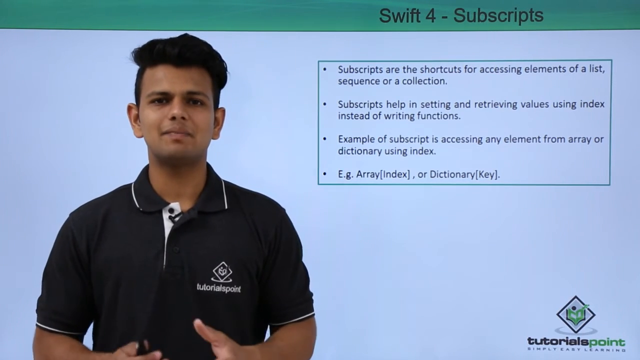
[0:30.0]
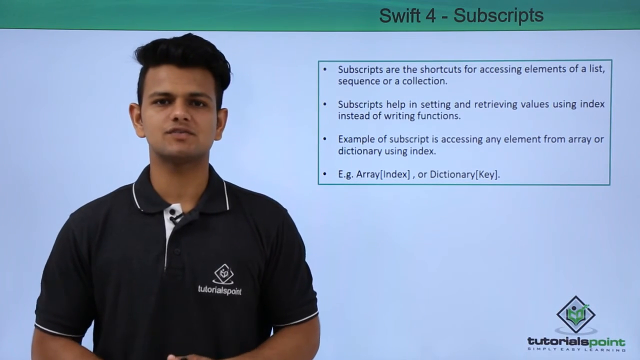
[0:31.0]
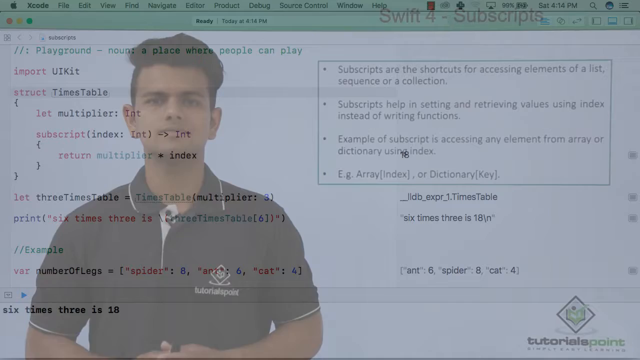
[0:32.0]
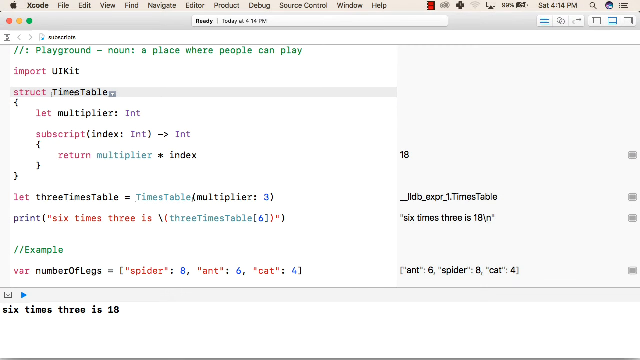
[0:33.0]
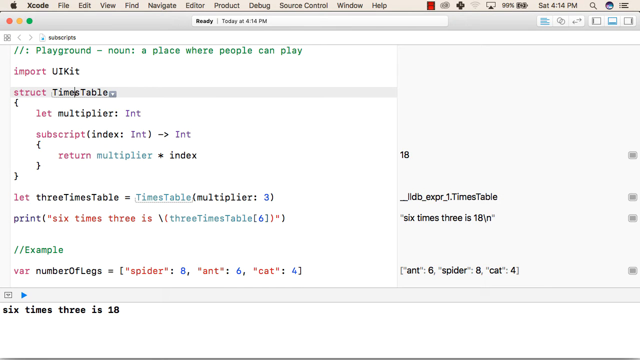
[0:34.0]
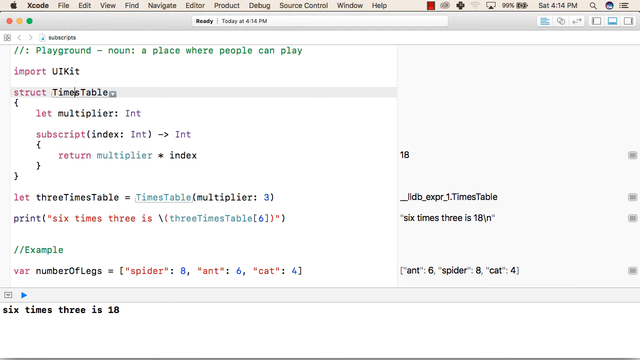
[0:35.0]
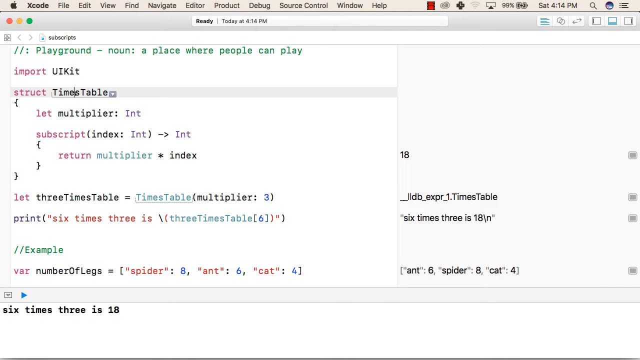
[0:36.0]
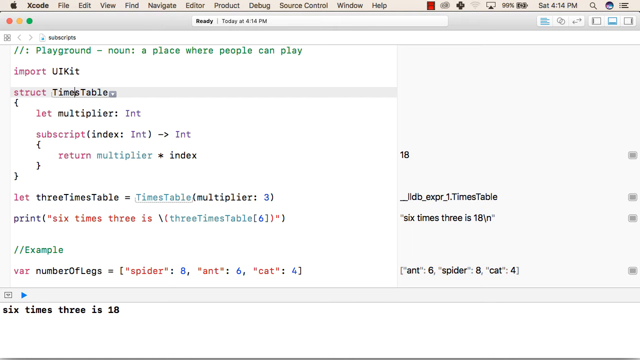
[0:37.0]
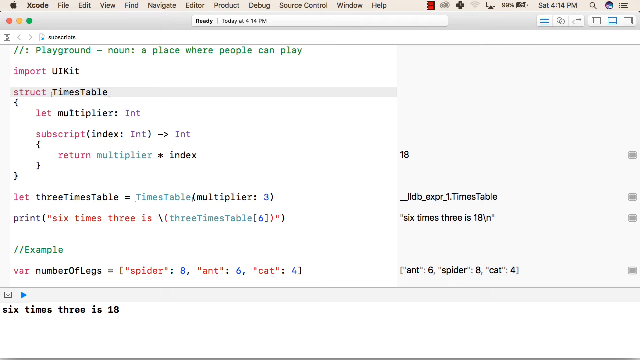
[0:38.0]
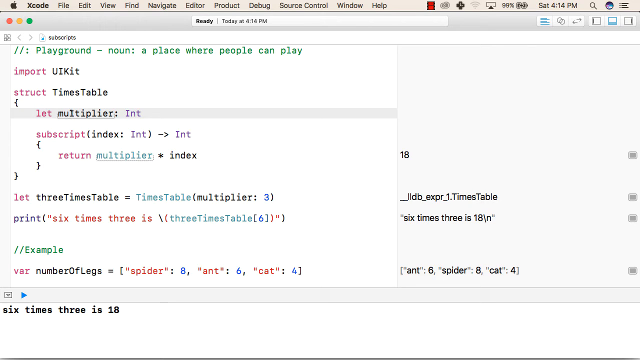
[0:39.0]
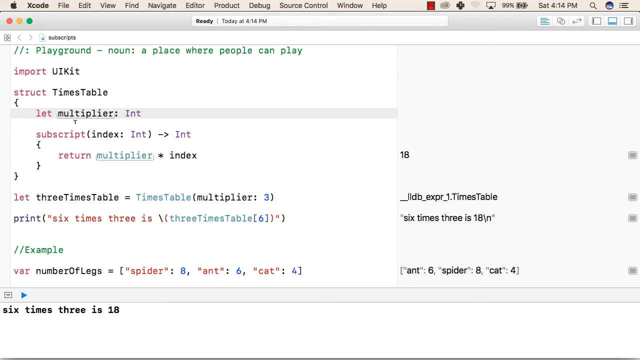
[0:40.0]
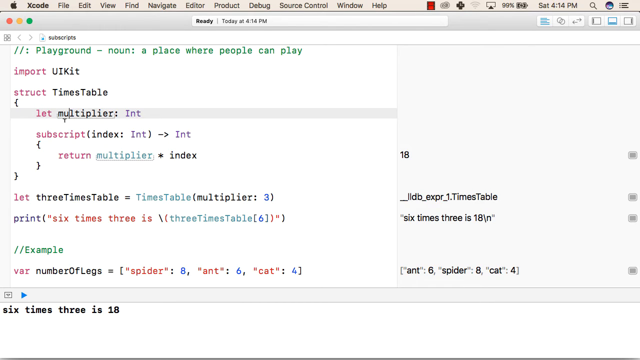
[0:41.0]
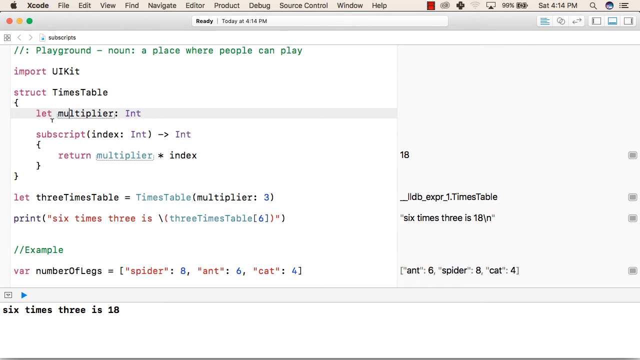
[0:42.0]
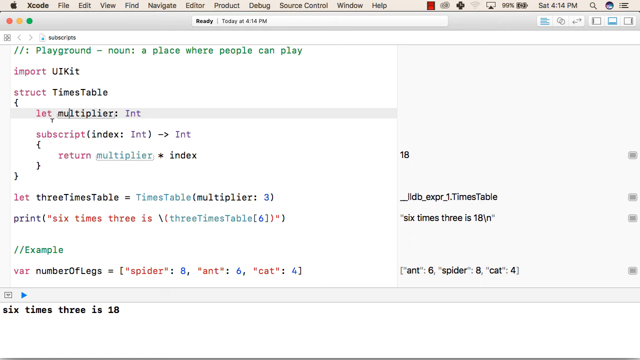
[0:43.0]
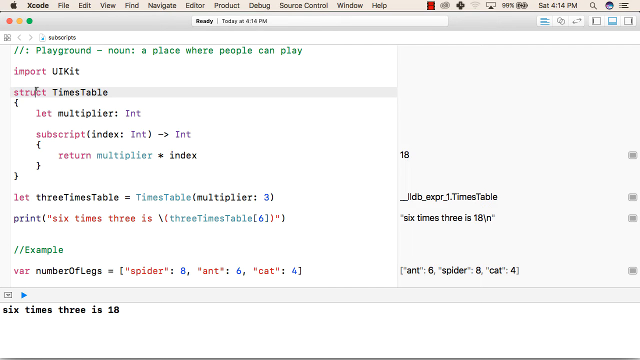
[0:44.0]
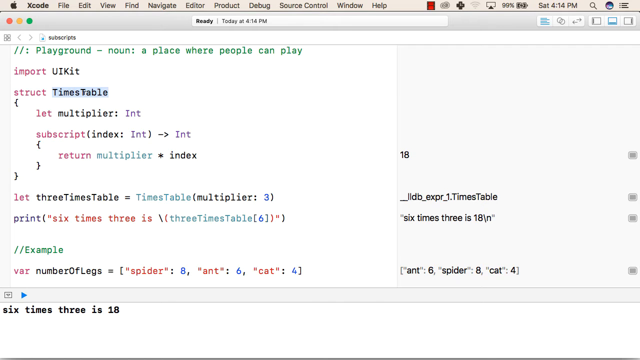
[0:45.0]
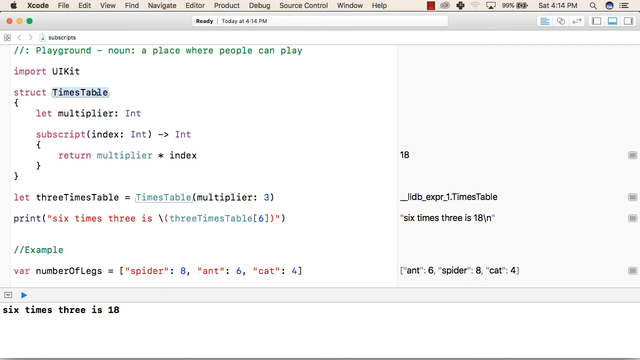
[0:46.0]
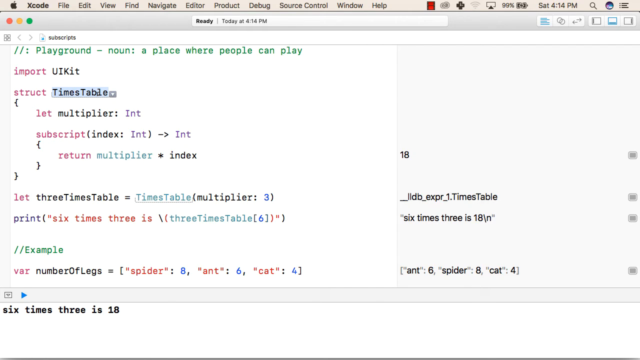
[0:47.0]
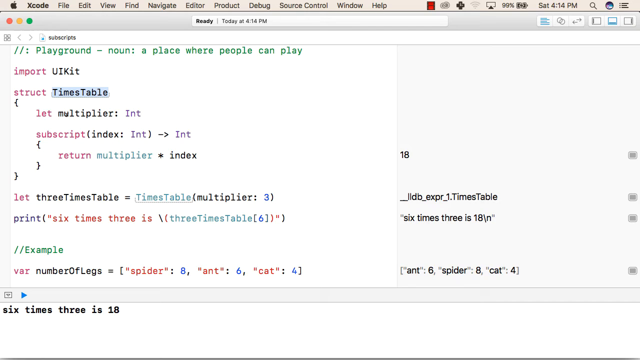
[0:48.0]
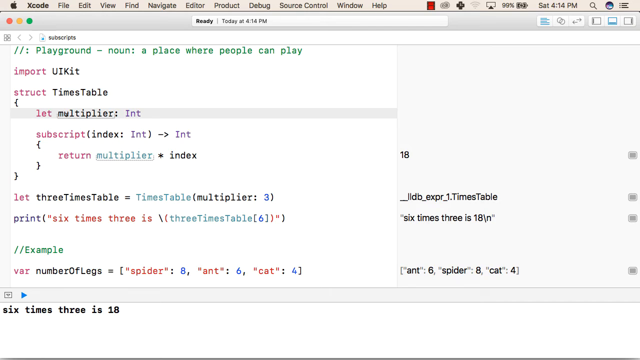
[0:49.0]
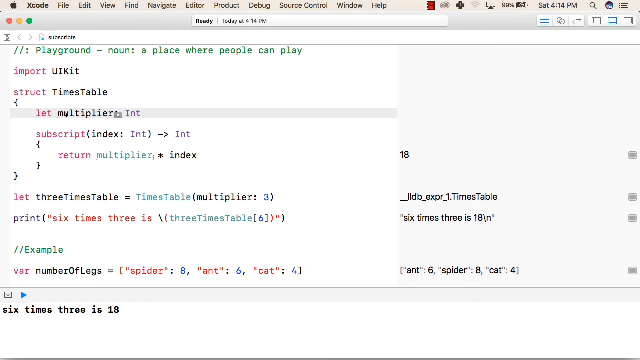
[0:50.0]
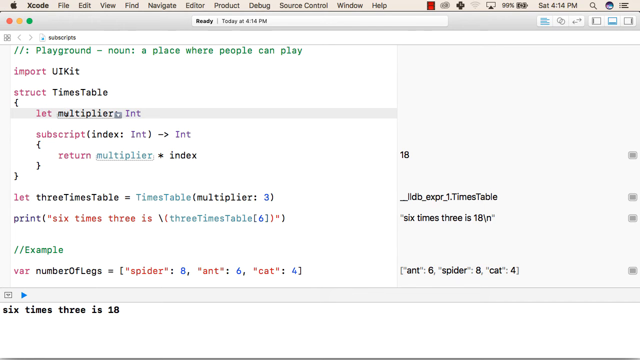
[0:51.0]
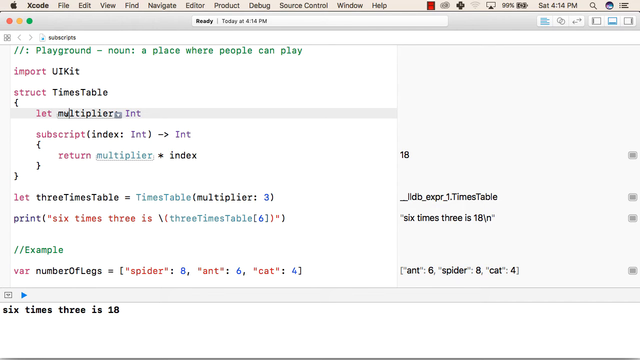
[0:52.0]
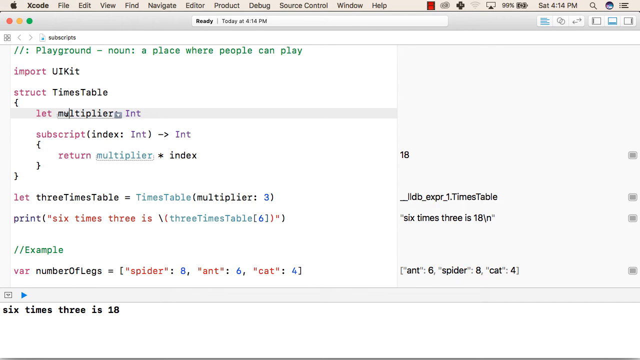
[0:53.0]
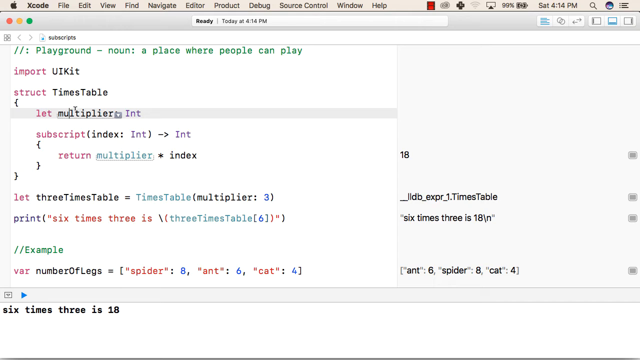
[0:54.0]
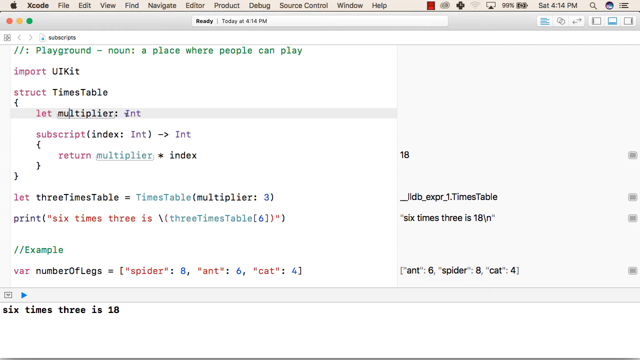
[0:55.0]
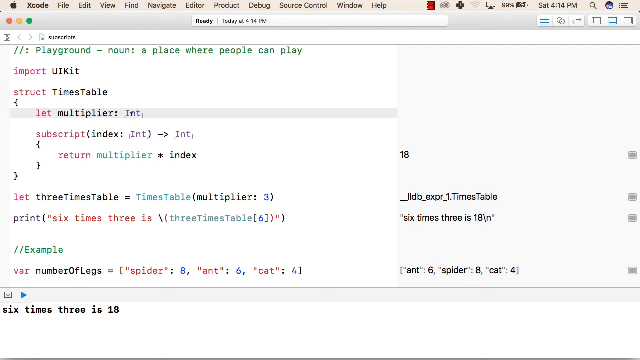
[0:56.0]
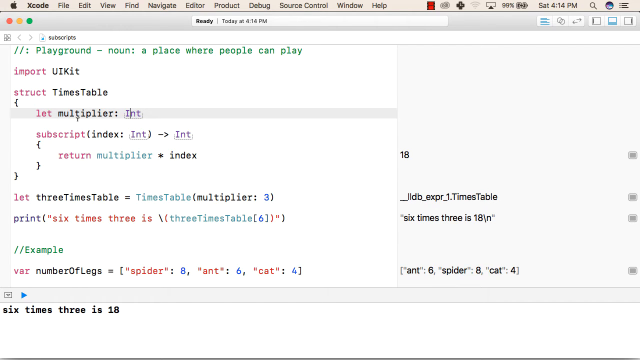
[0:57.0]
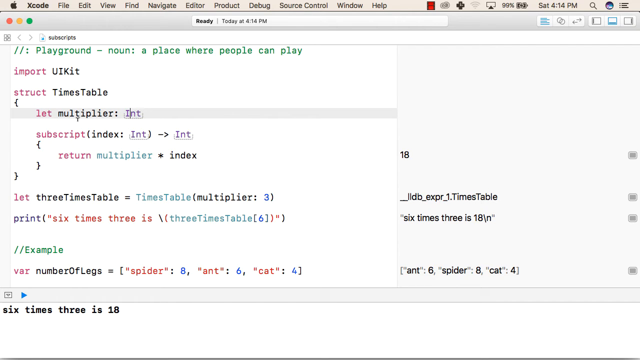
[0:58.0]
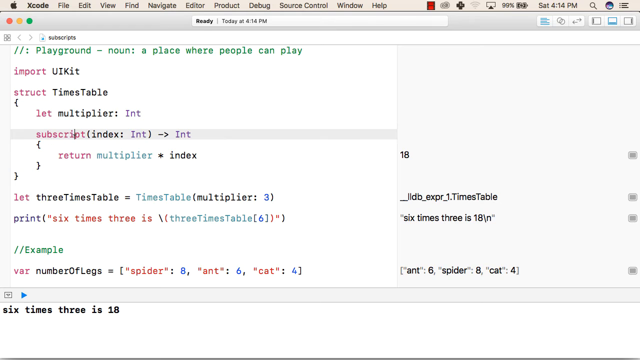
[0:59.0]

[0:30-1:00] The man in the polo shirt continues his lesson, and the video transitions to an example in Xcode. The screen shows "ready," several headers, a battery charged to 99%, and a time of around 4 pm. A lot is going on in the example, including the text "playground noun a place where people can play." The man, wearing a black shirt, continues the presentation on subscripts.